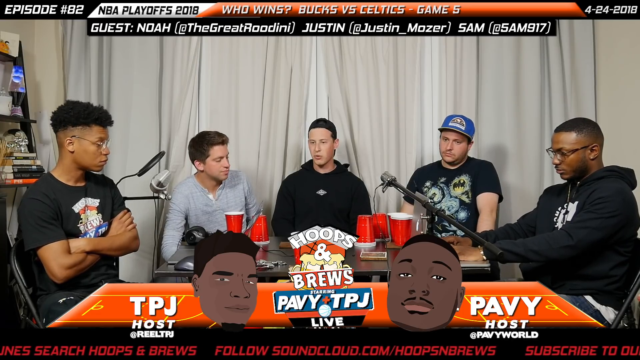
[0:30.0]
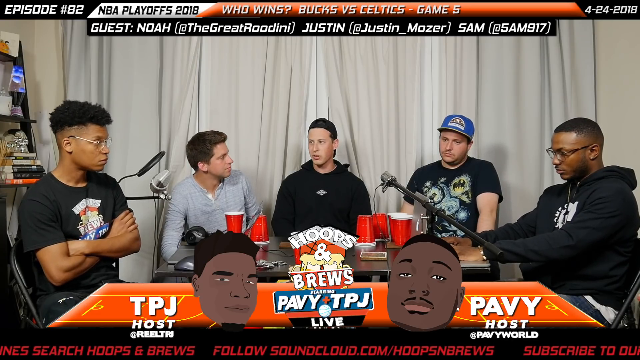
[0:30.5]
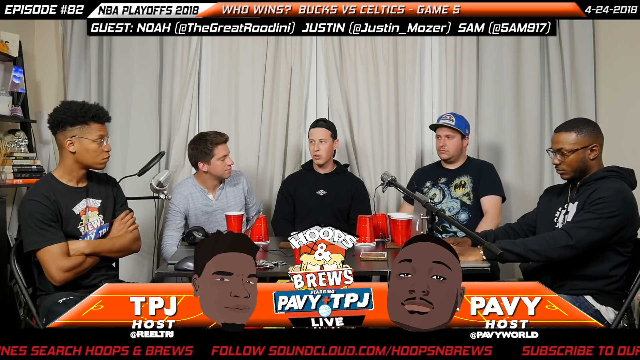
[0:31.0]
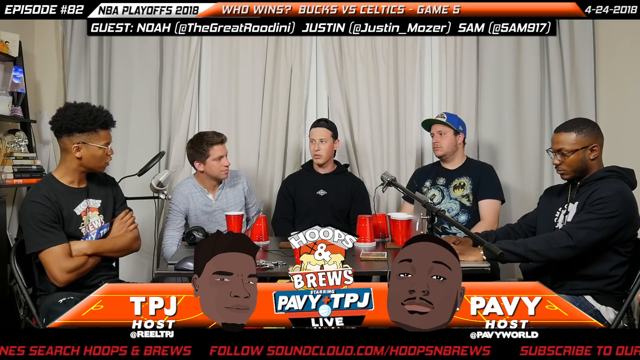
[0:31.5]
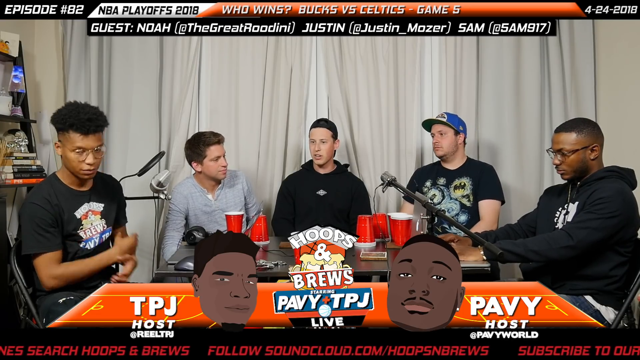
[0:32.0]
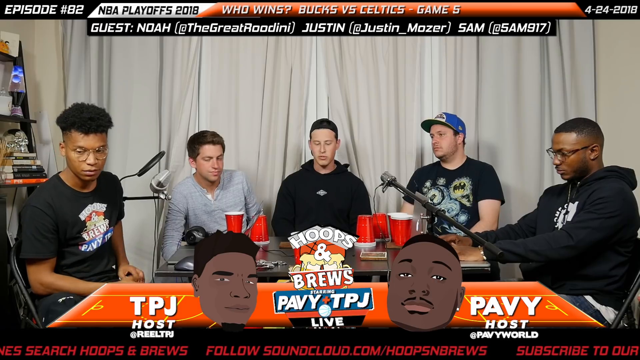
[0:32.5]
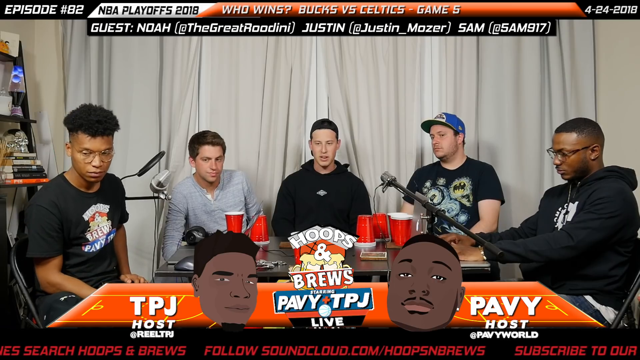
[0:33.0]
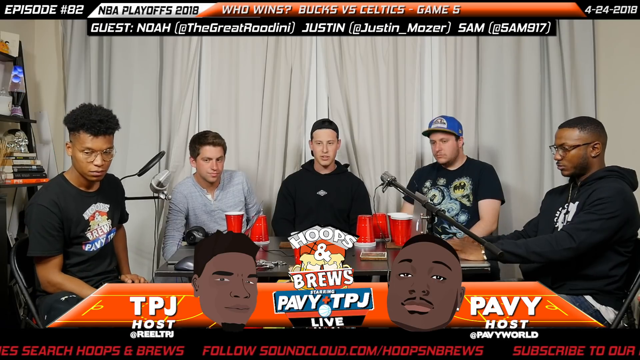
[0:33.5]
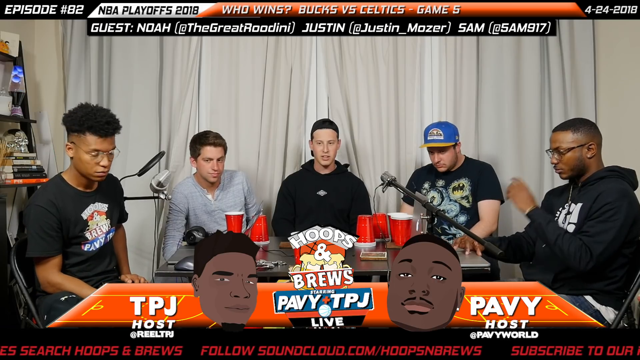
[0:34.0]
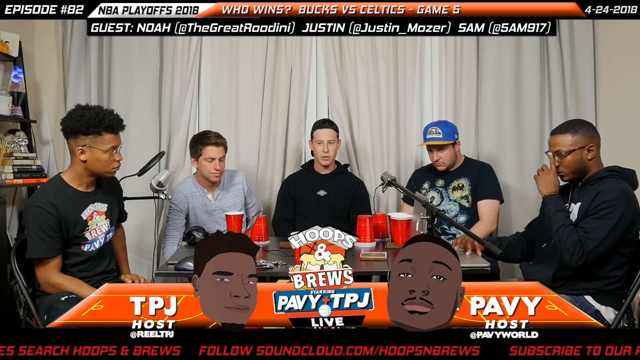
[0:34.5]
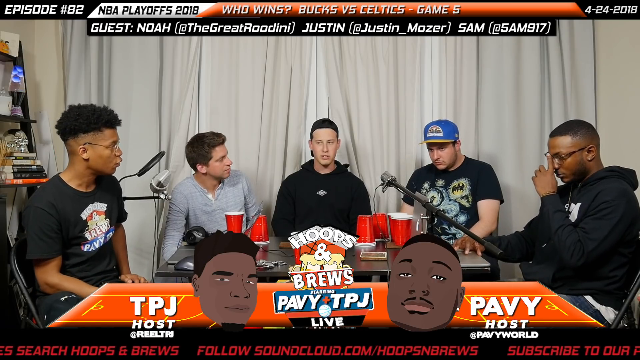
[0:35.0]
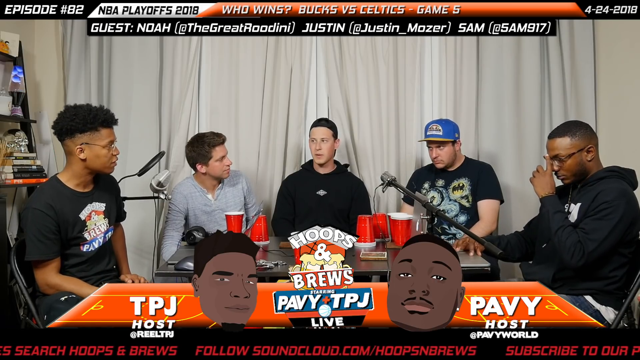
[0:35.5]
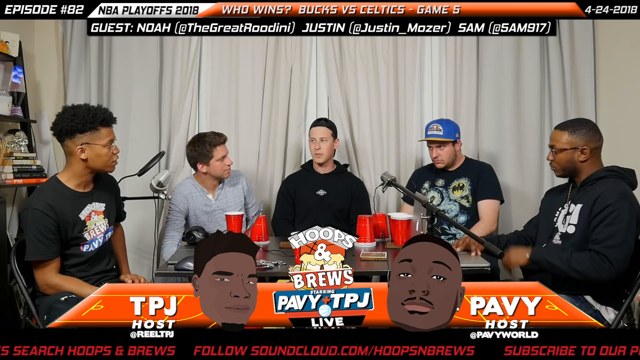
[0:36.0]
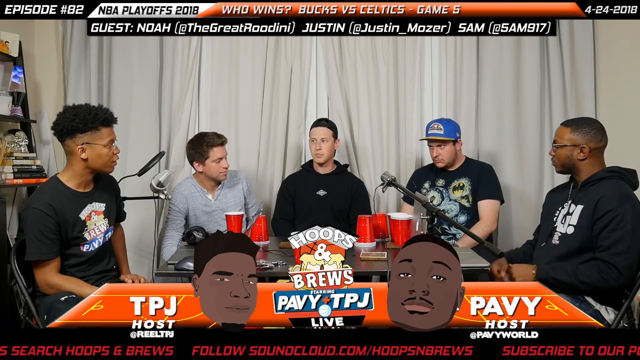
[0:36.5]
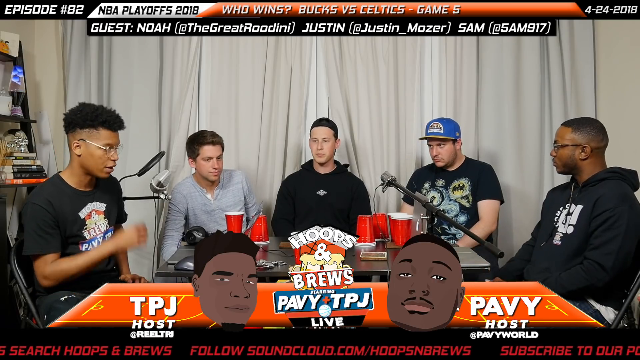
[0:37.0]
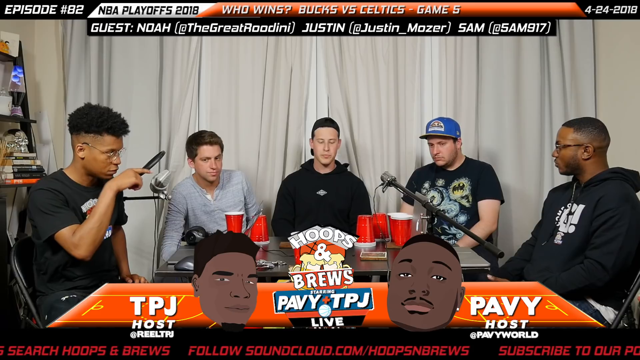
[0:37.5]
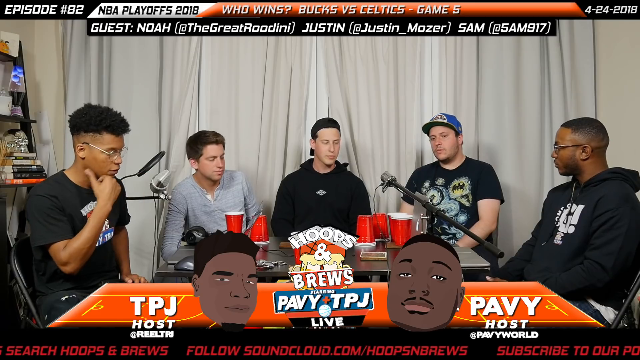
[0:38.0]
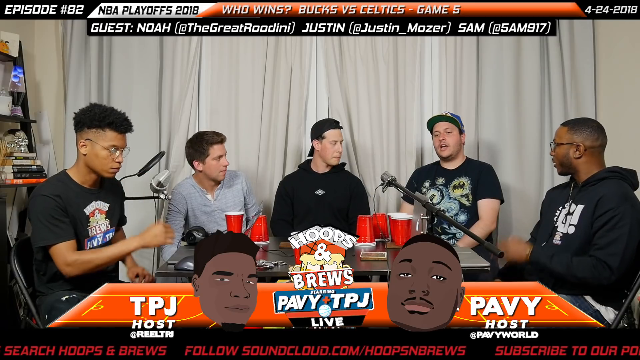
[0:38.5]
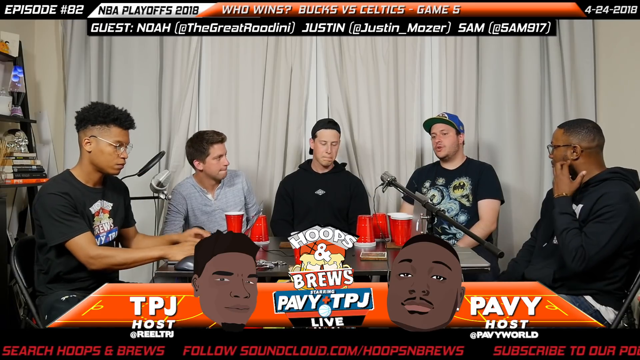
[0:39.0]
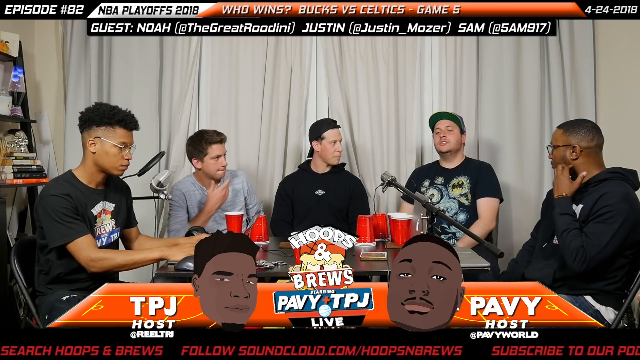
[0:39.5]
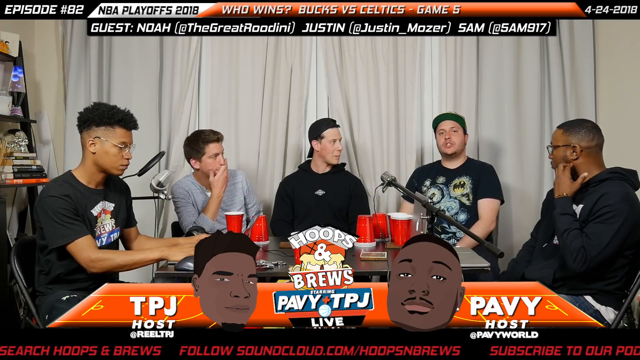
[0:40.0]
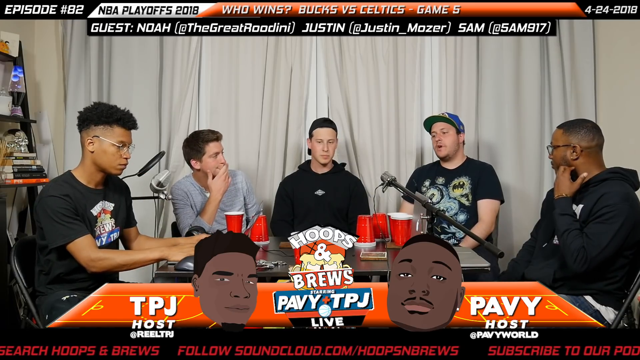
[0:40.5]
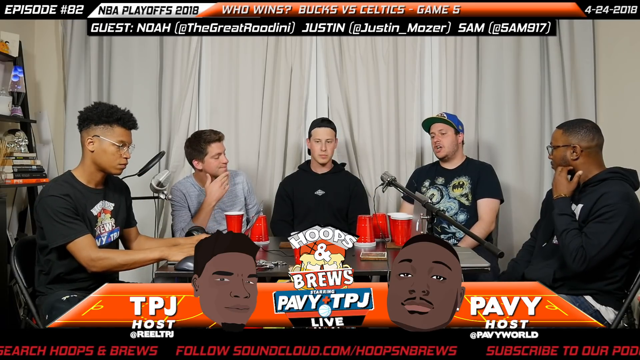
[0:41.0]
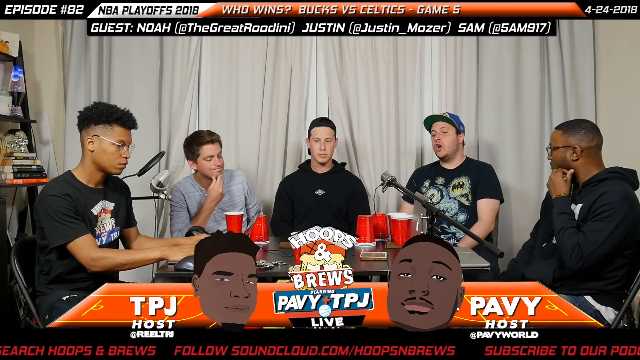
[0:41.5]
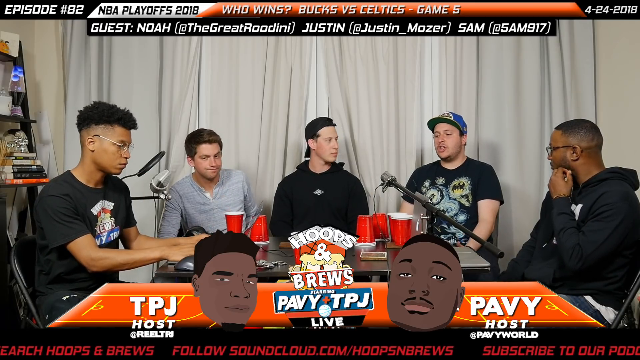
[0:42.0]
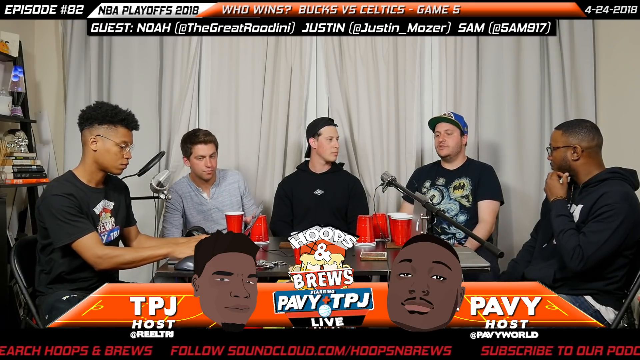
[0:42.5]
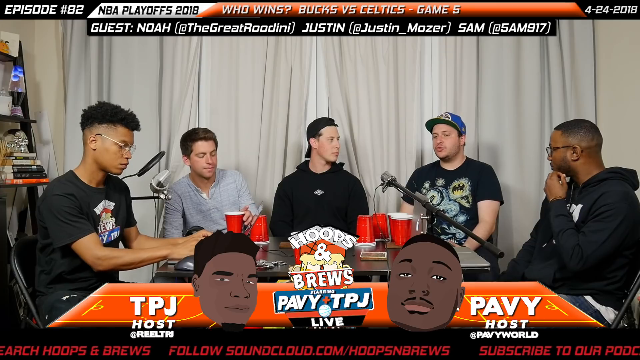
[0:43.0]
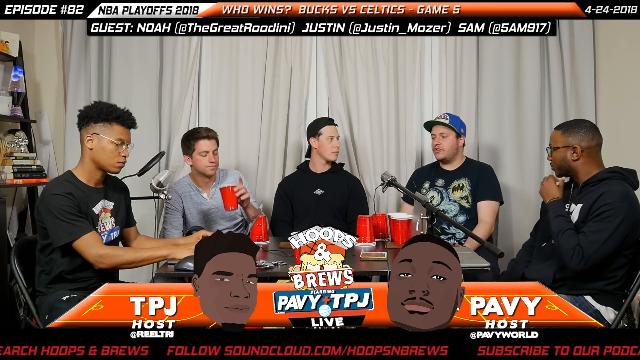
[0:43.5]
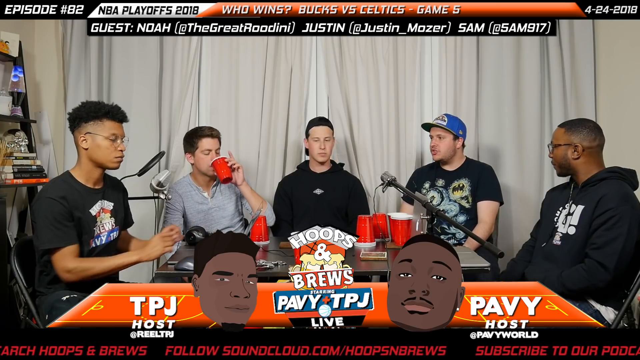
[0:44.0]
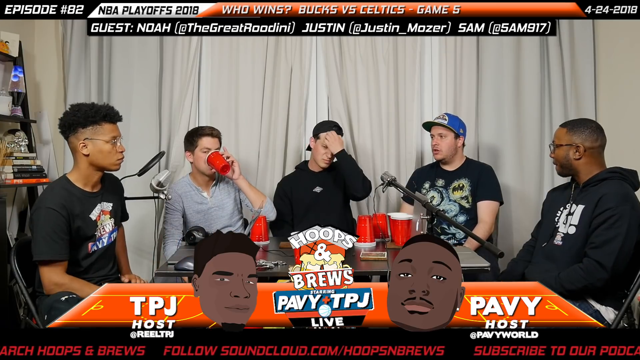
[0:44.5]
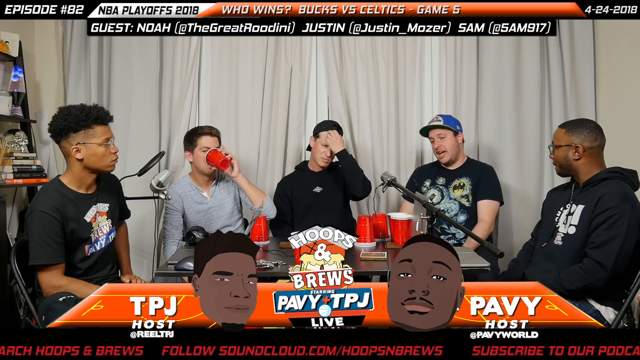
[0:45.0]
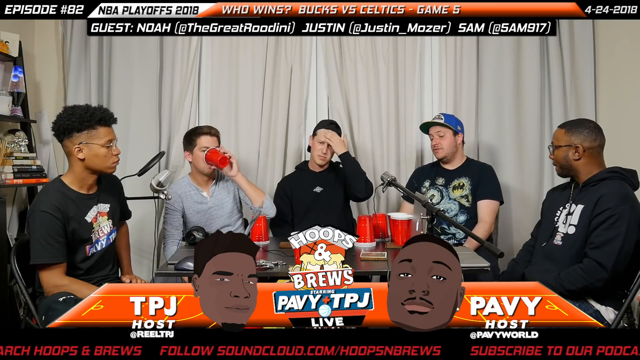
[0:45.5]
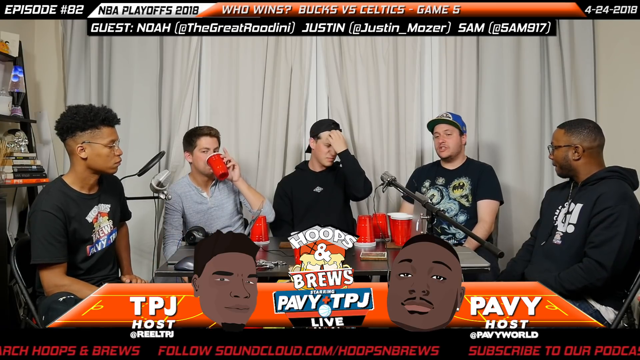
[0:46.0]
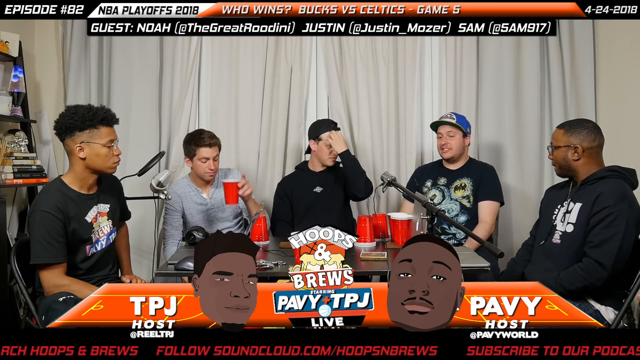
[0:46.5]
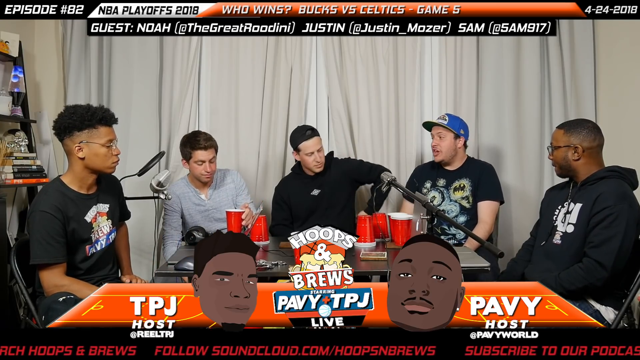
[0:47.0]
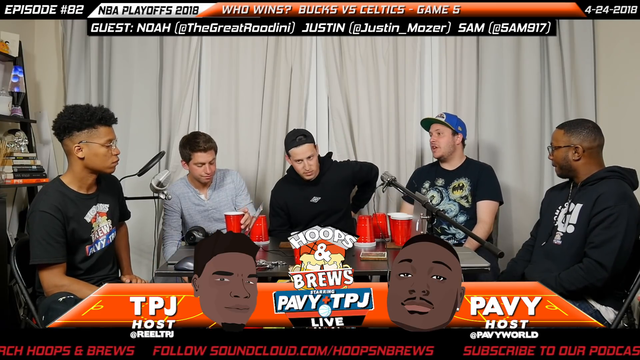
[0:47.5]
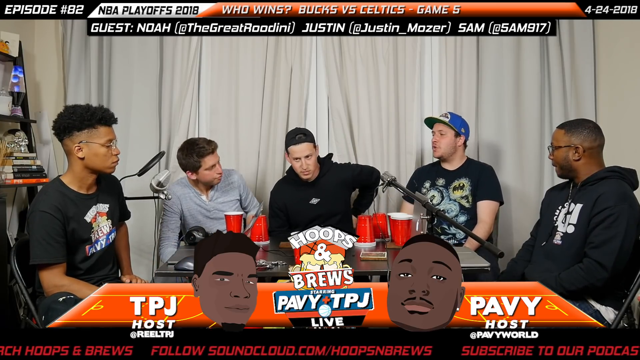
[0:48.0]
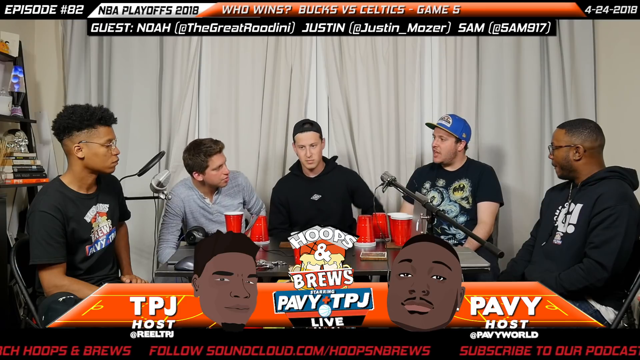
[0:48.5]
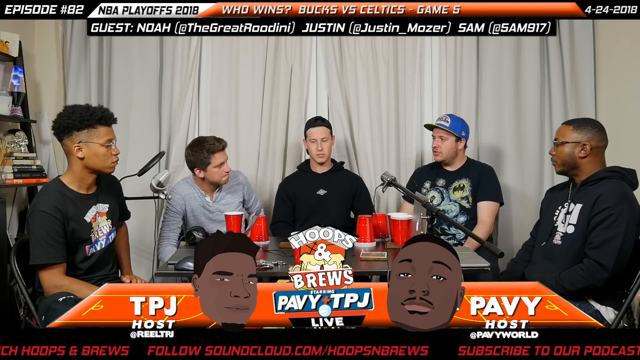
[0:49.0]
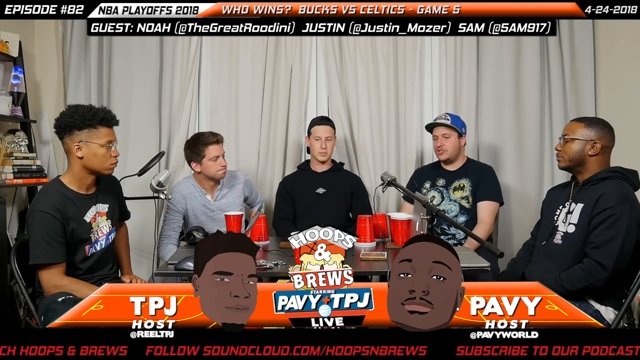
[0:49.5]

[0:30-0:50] Five people are focused on a basketball game. Text asks who wins the Celtics game, and the episode number is given as 18 of the playoffs. The top right section of the screen reads "April 24th of 2018." A tanker appears in the background.